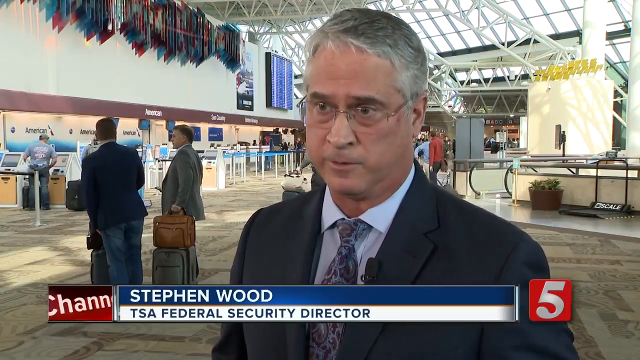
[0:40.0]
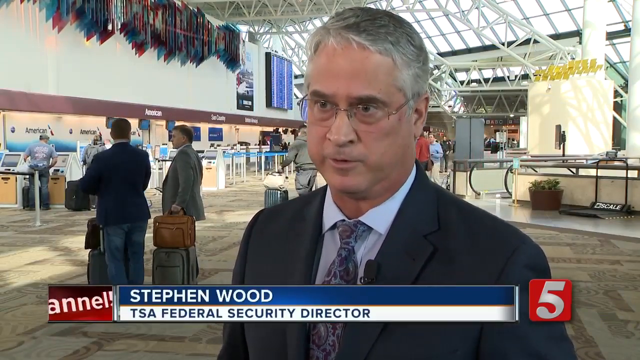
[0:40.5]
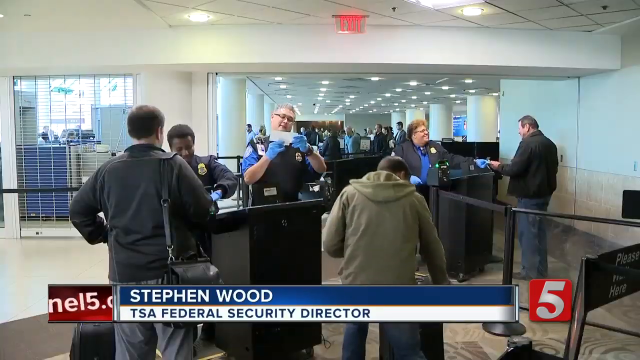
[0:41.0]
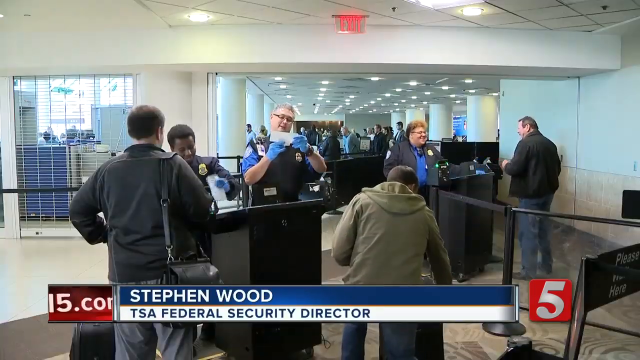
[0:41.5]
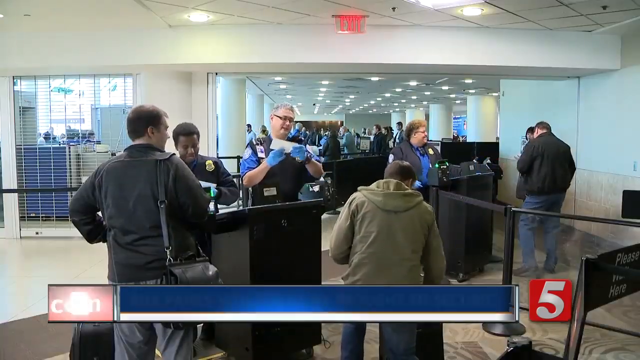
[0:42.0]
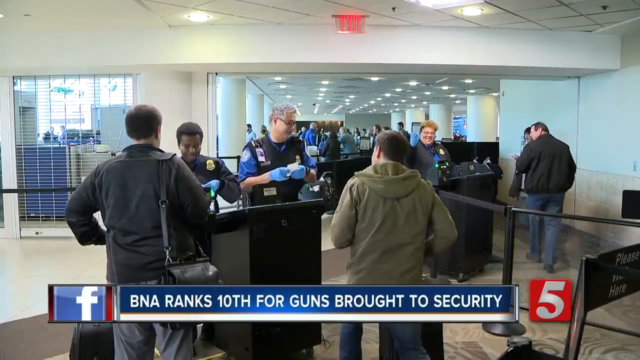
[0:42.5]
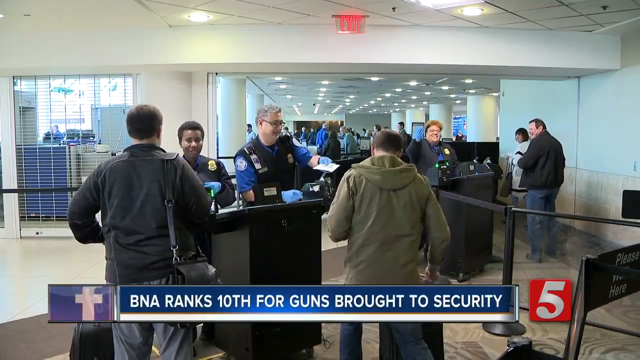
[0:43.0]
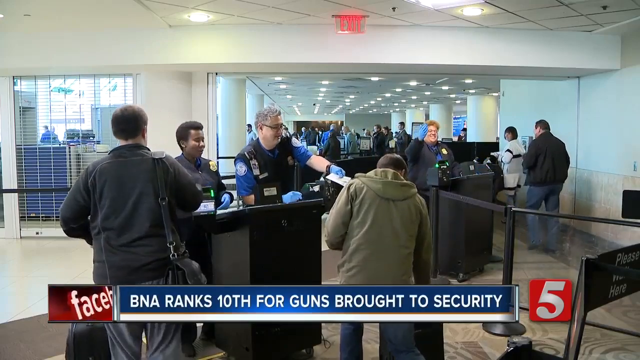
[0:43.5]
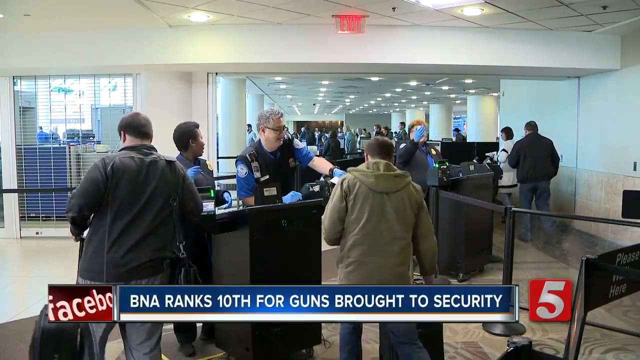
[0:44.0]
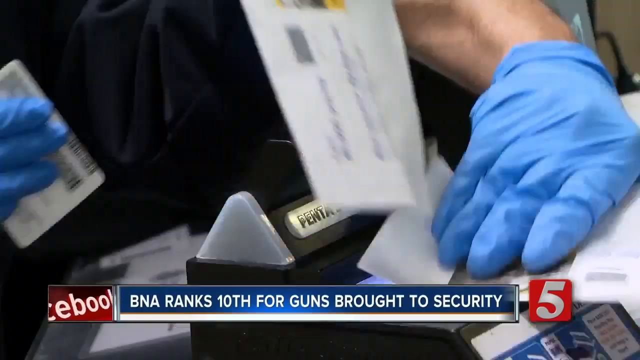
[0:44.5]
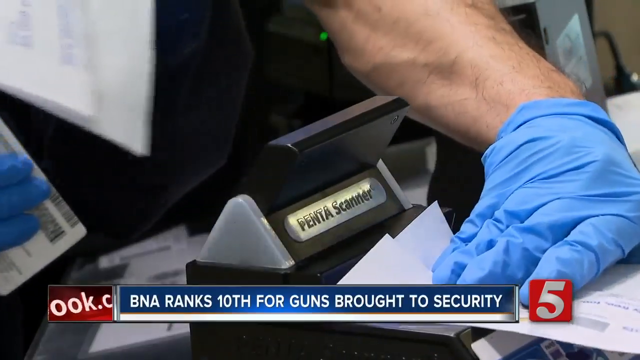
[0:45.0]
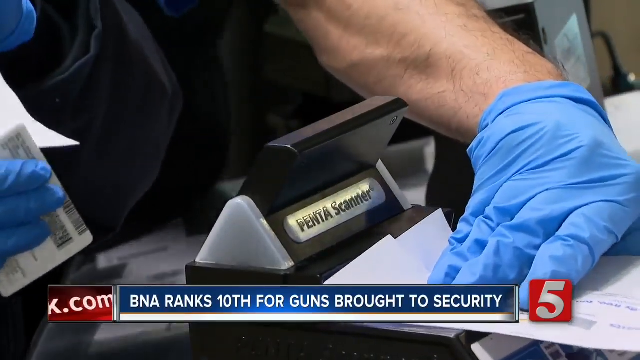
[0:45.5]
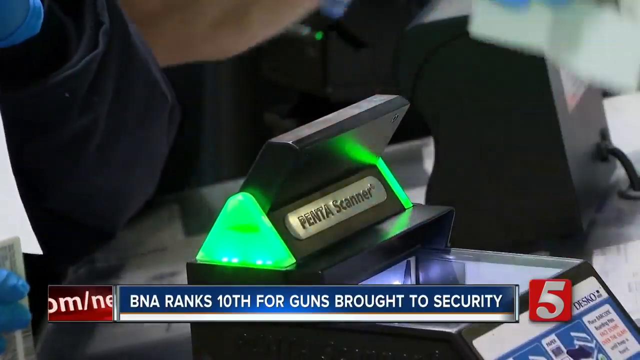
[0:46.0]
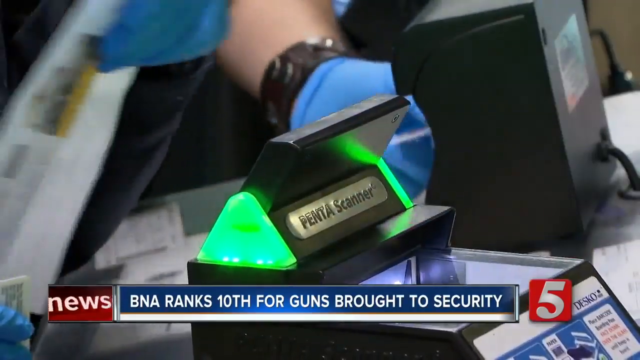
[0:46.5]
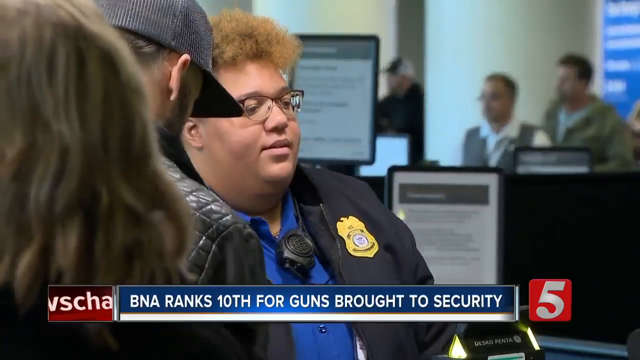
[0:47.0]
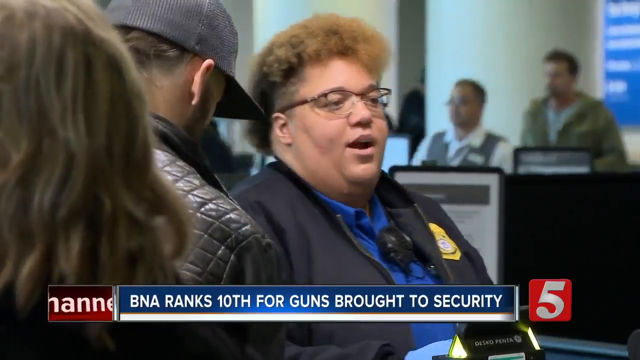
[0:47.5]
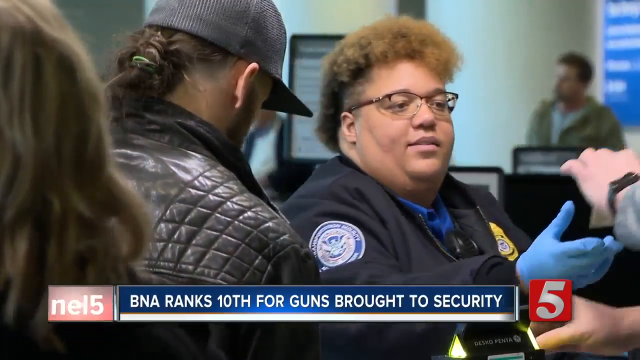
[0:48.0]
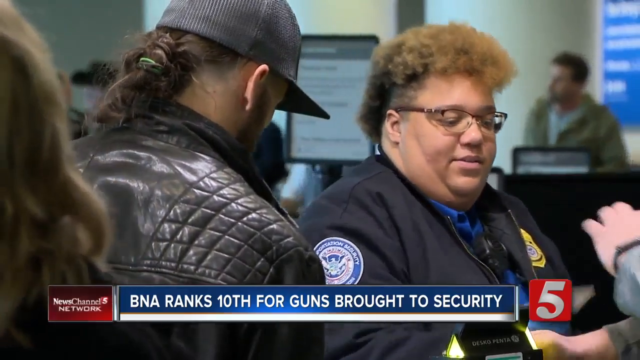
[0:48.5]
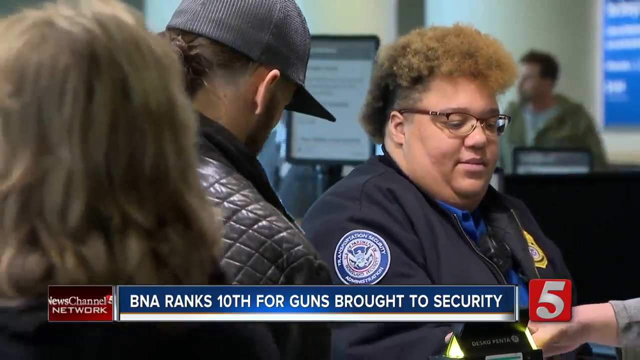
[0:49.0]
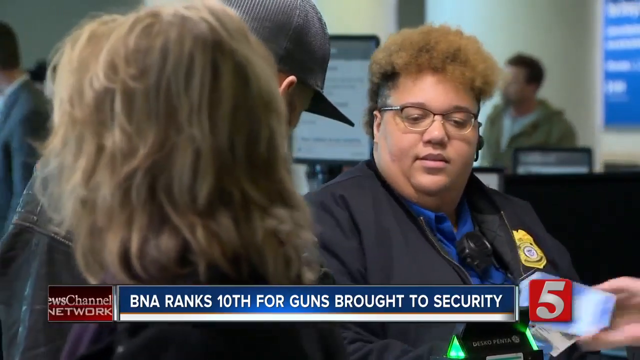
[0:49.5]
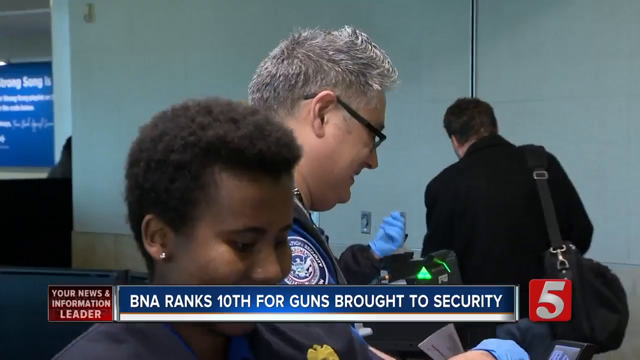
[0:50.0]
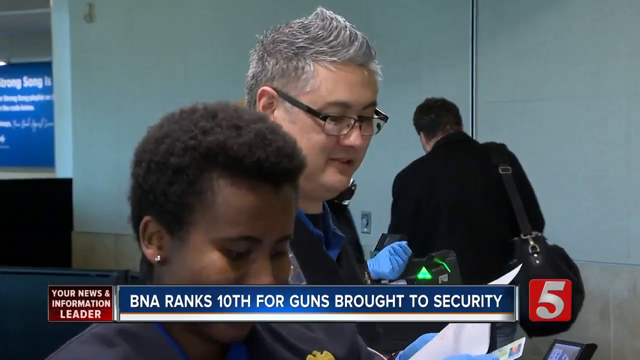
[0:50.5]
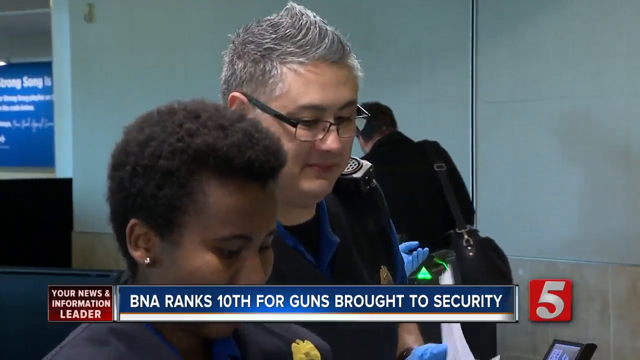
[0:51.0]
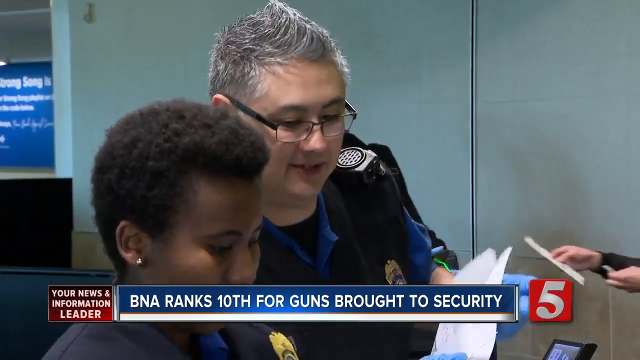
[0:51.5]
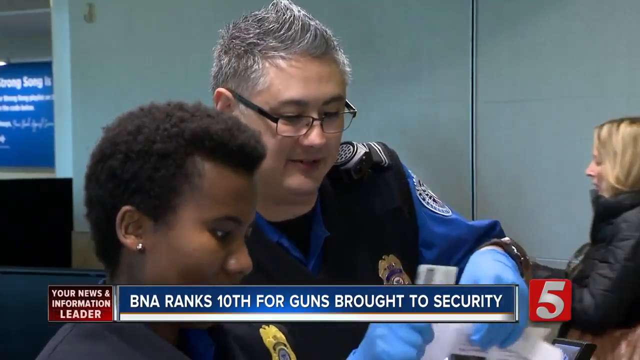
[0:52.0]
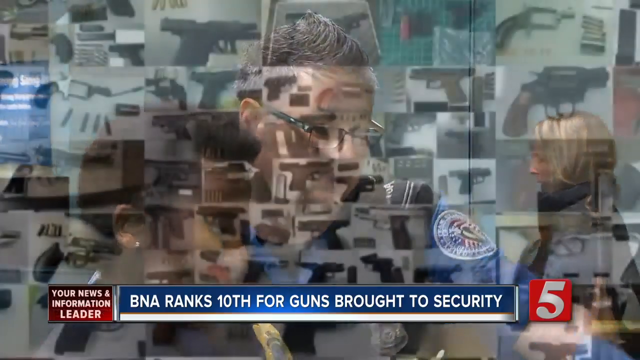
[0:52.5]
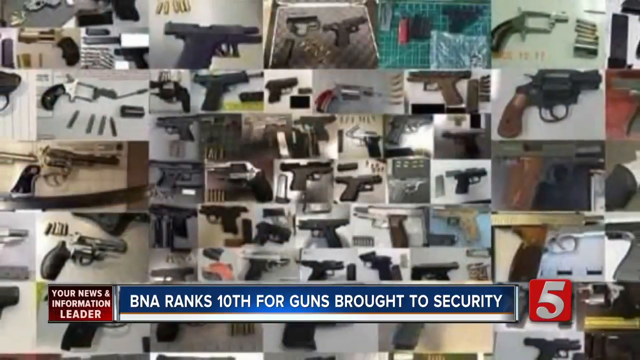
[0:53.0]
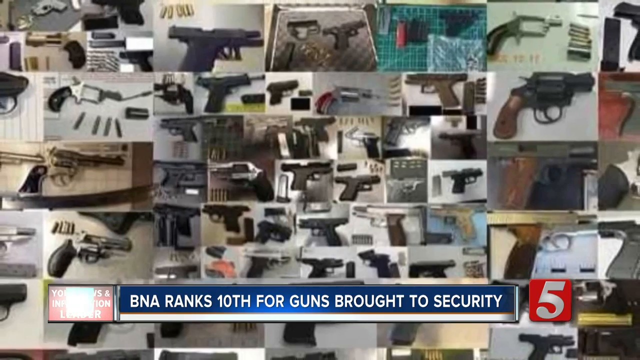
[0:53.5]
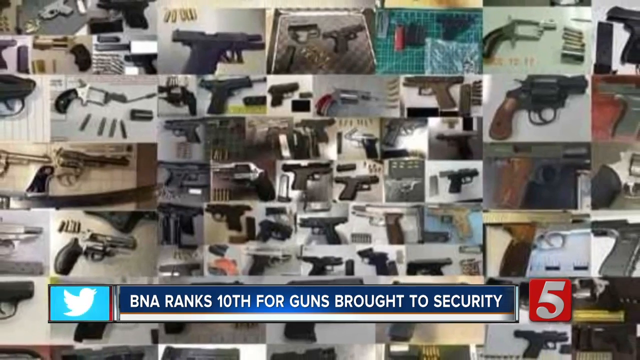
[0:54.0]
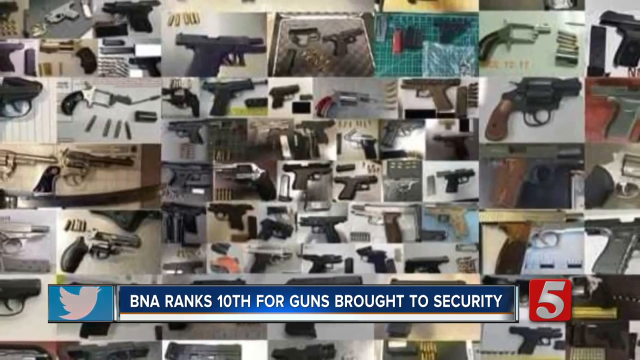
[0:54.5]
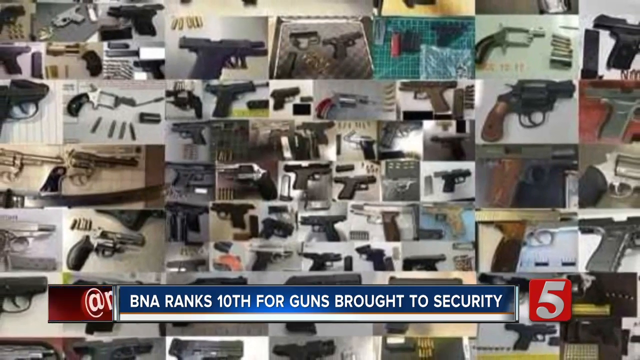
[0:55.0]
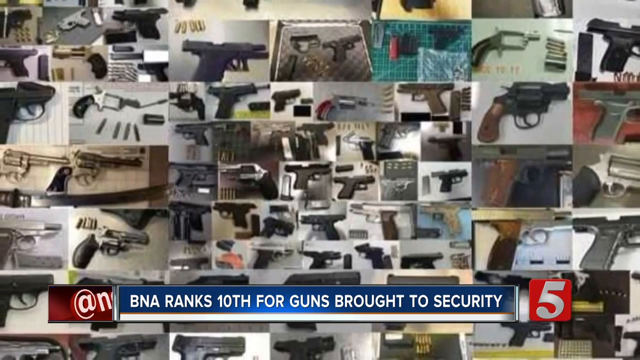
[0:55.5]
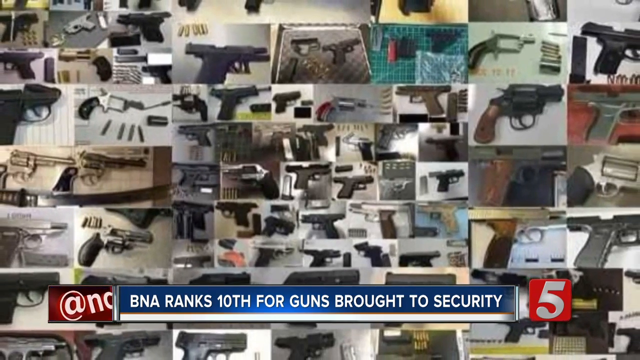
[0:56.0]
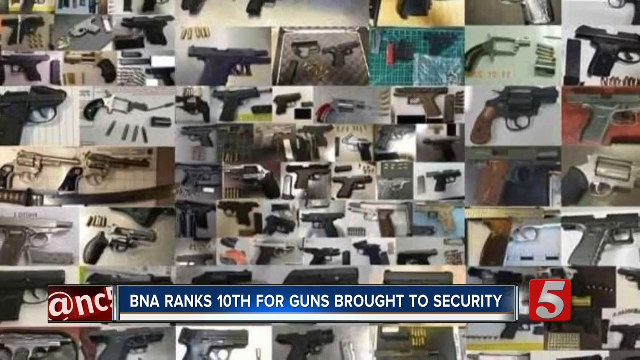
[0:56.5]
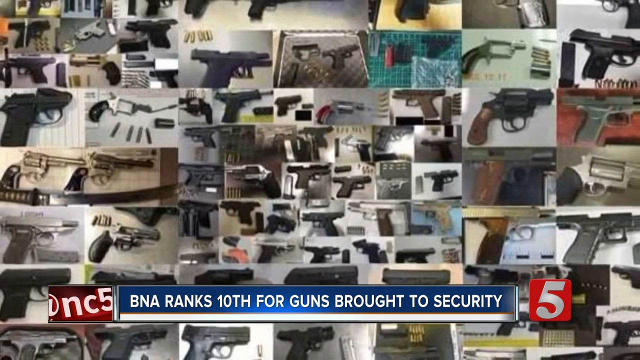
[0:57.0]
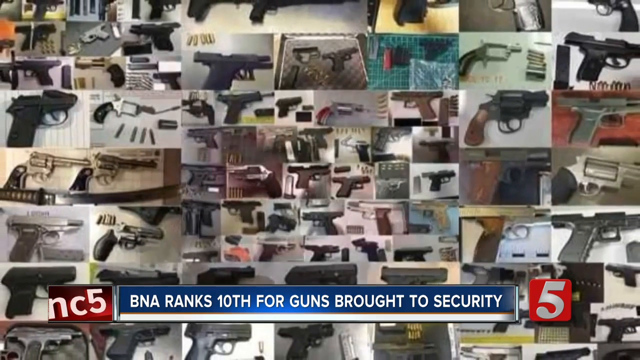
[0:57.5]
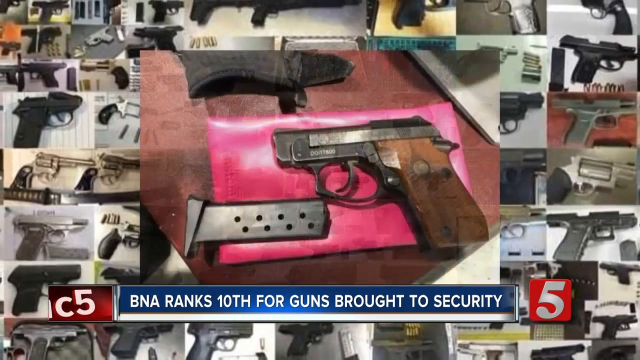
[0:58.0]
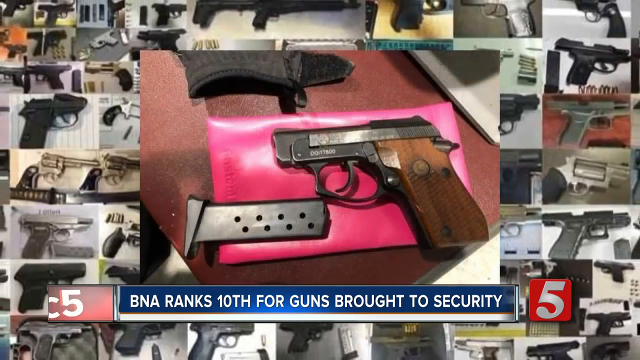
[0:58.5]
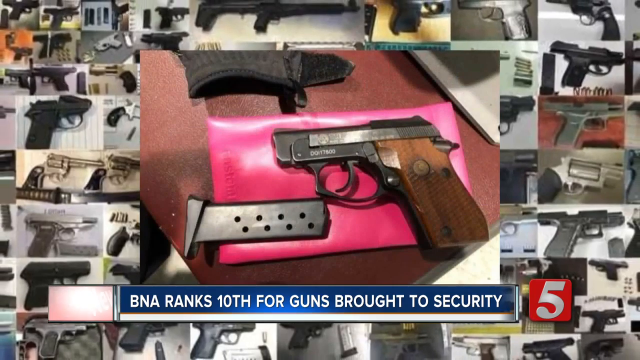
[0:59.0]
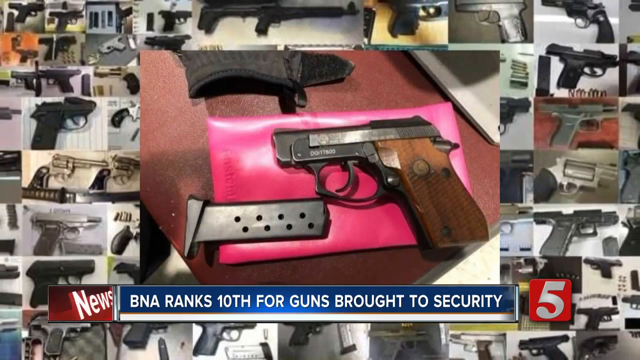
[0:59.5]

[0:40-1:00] The TSA federal security director speaks. Police officers or security staff check passengers for guns and weapons and check passports, and the passengers go through a machine that shows green. A screen shows guns and bullets that people have brought.